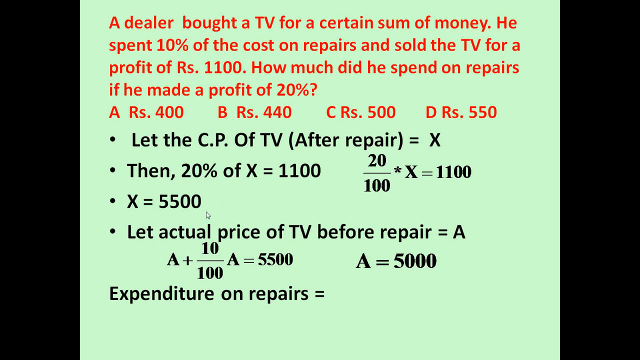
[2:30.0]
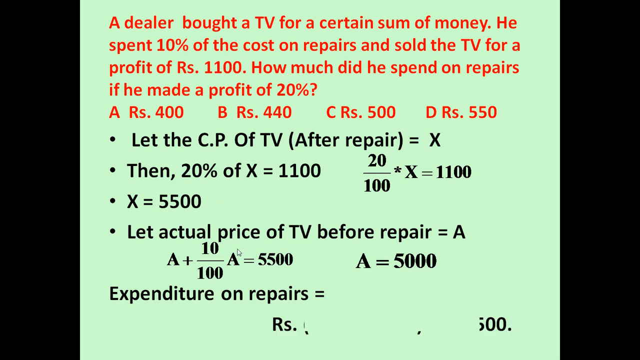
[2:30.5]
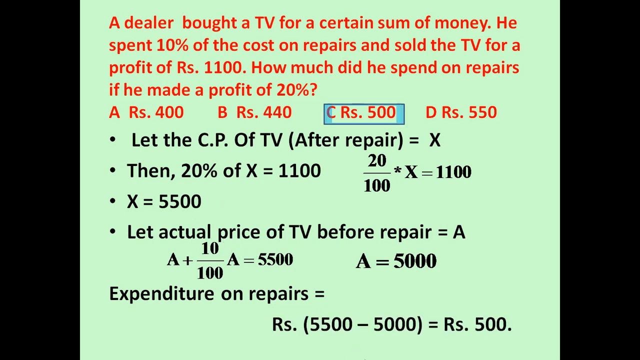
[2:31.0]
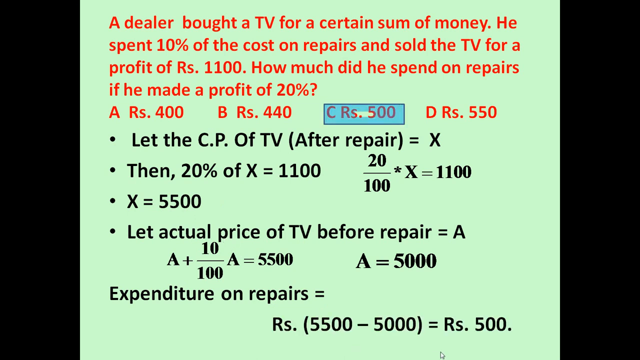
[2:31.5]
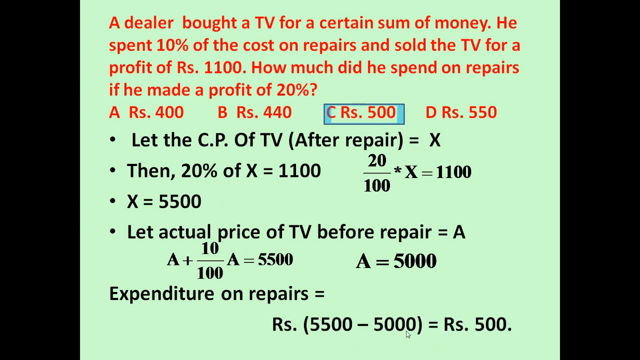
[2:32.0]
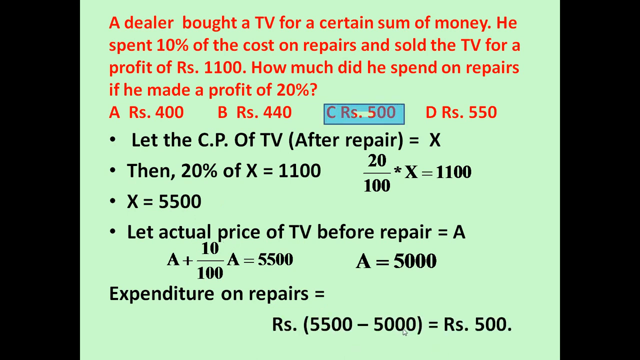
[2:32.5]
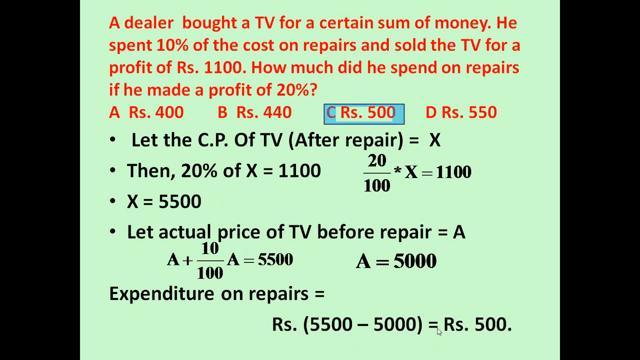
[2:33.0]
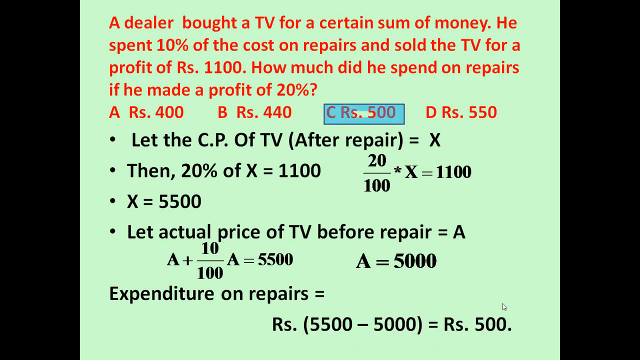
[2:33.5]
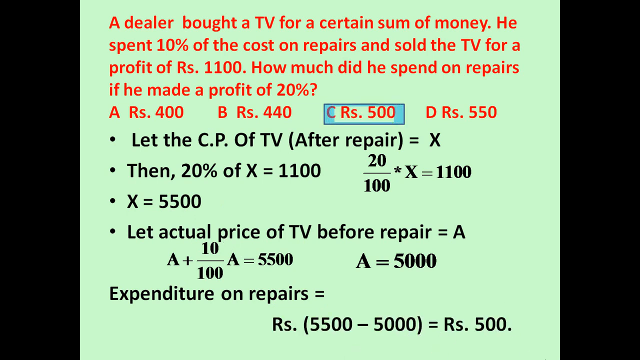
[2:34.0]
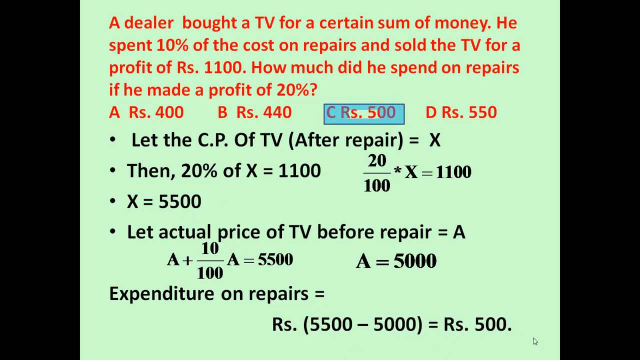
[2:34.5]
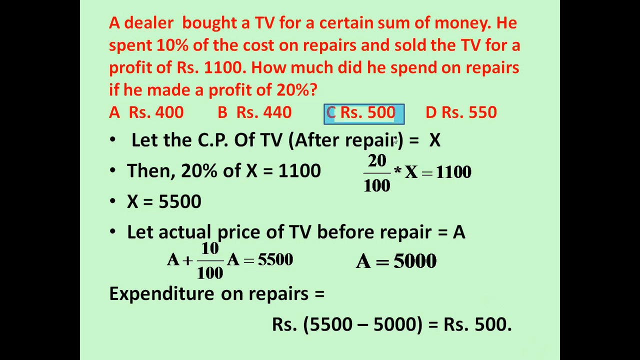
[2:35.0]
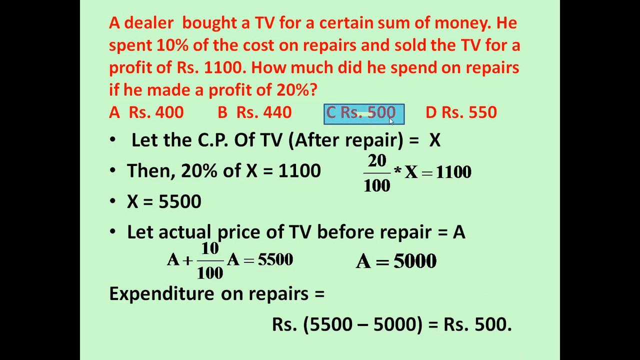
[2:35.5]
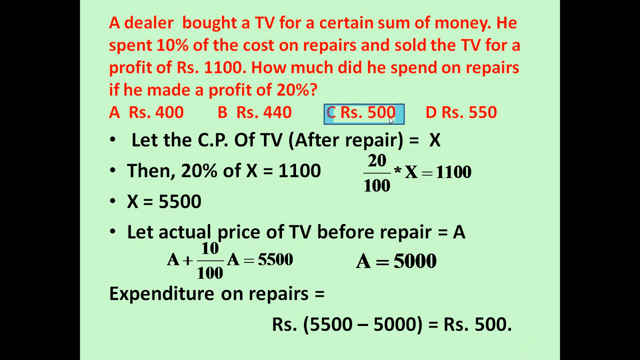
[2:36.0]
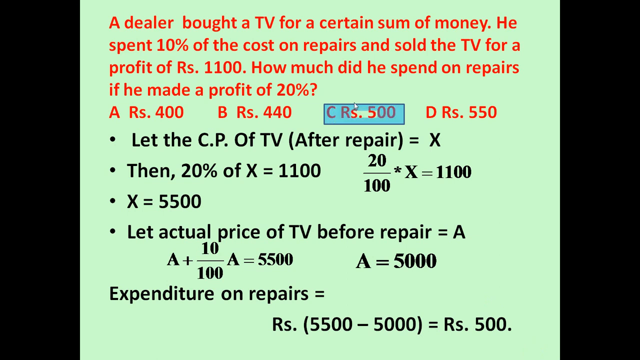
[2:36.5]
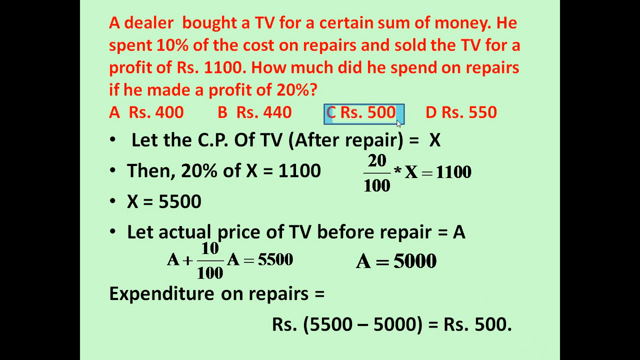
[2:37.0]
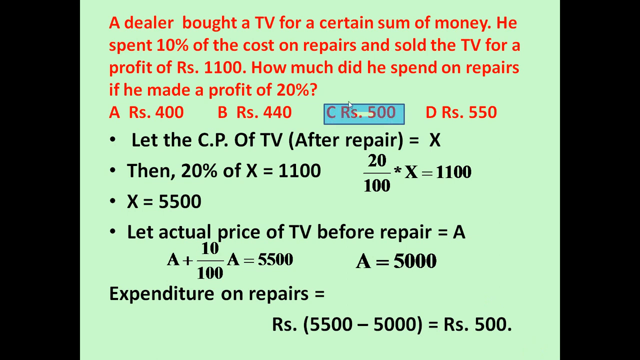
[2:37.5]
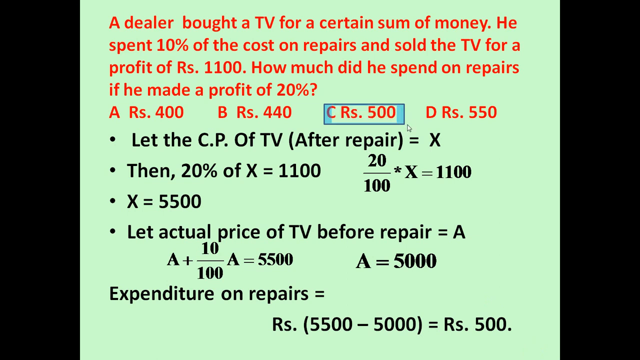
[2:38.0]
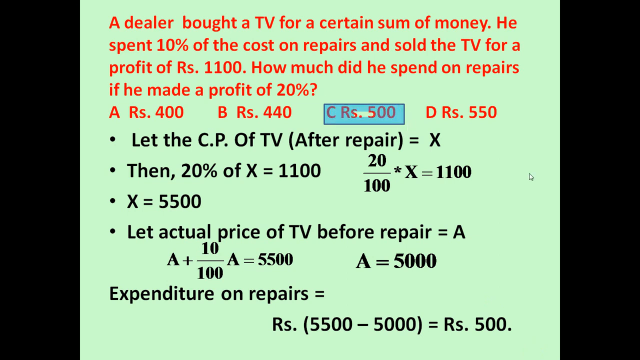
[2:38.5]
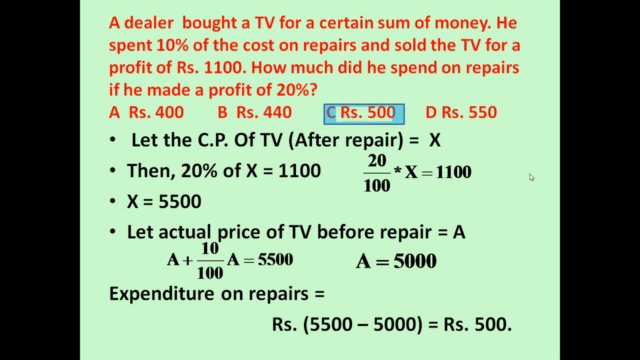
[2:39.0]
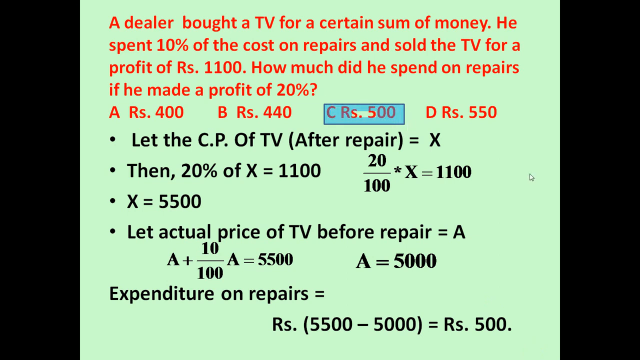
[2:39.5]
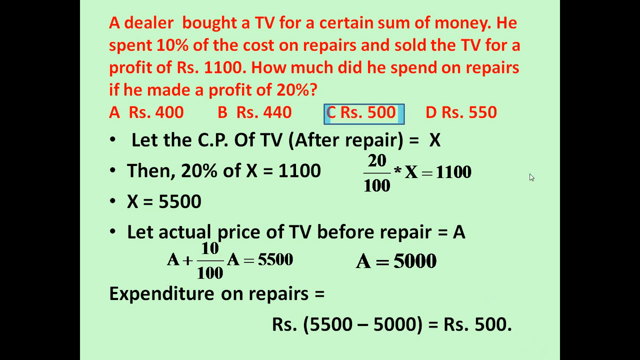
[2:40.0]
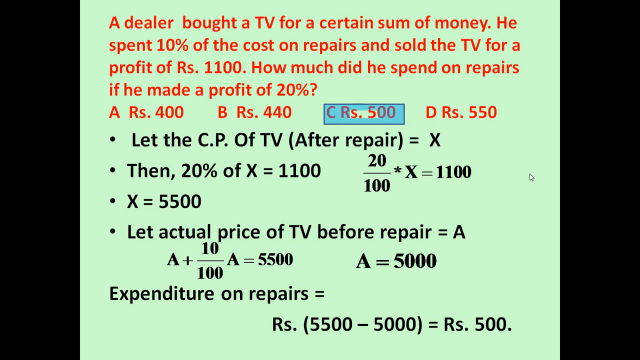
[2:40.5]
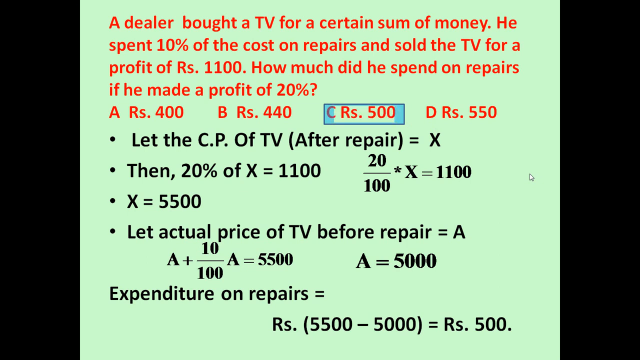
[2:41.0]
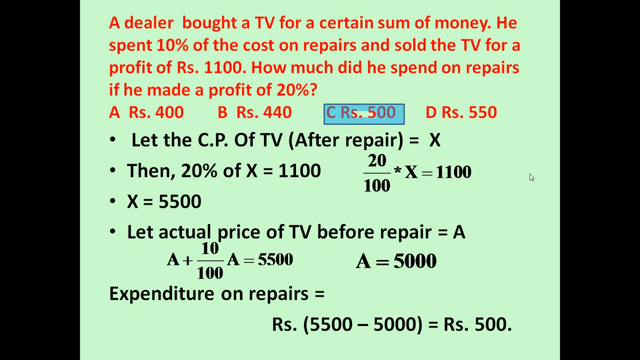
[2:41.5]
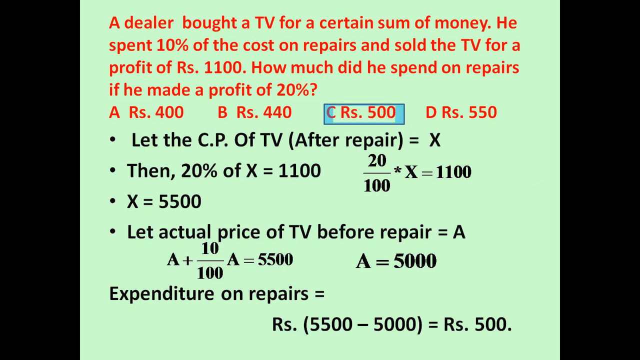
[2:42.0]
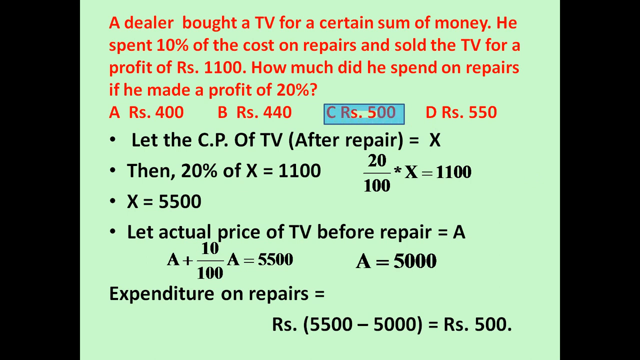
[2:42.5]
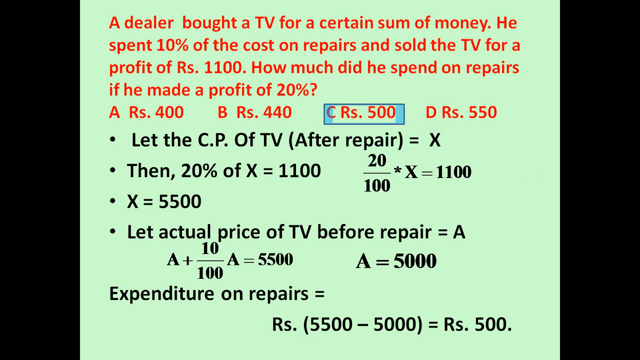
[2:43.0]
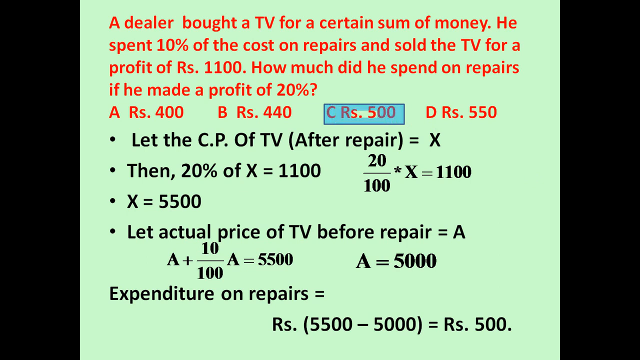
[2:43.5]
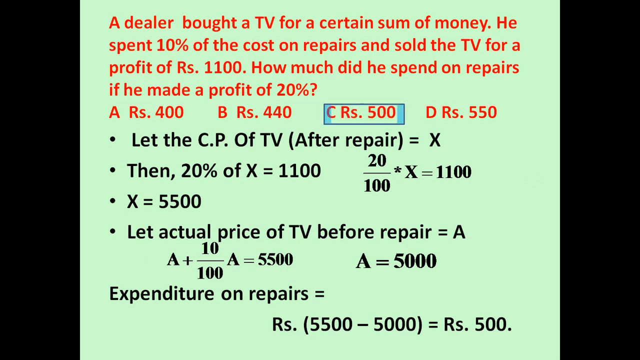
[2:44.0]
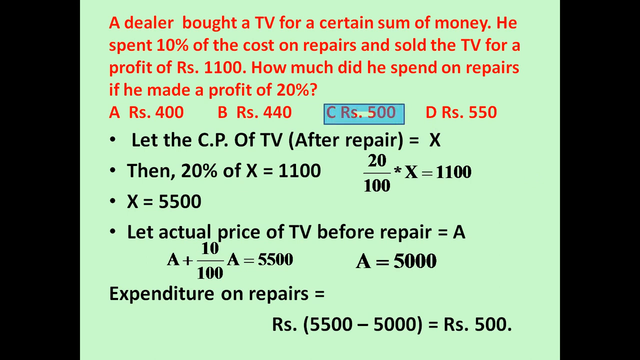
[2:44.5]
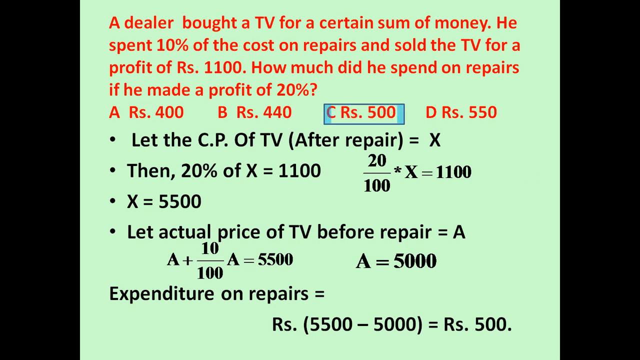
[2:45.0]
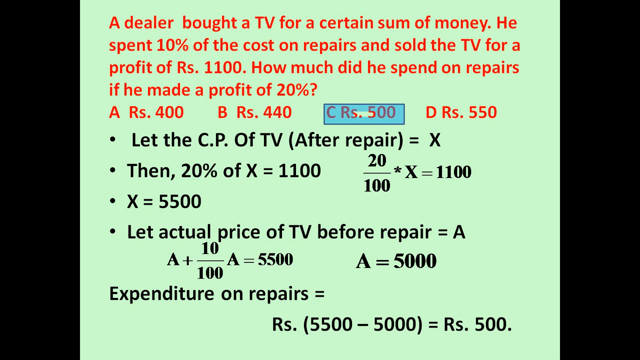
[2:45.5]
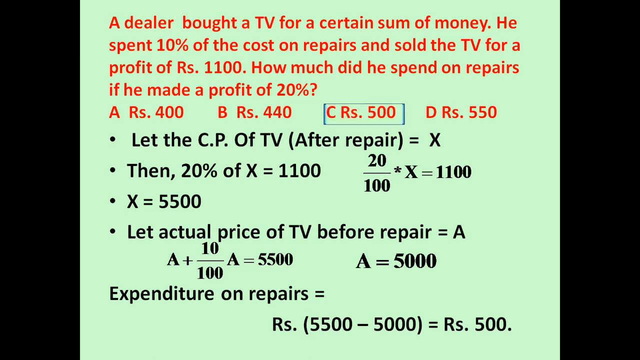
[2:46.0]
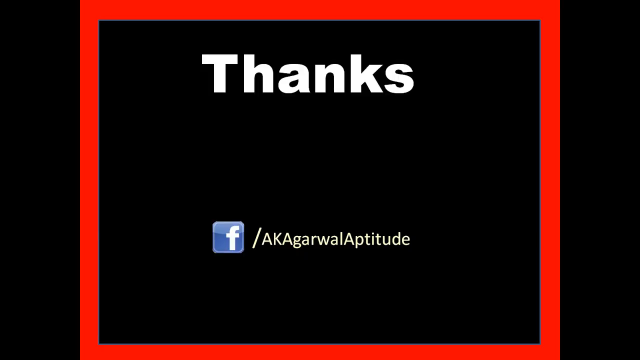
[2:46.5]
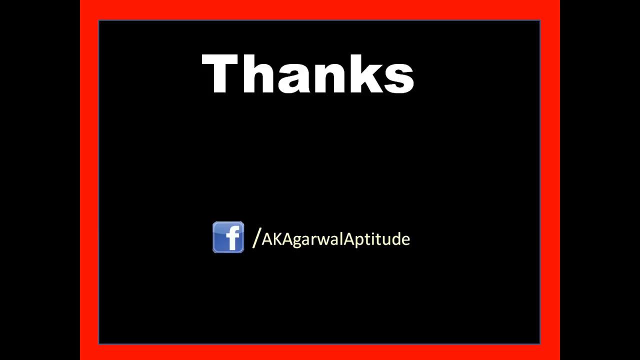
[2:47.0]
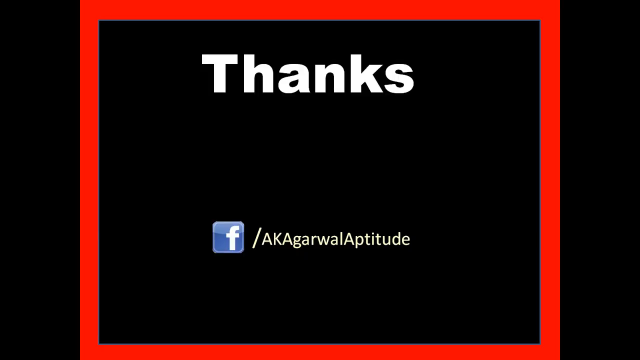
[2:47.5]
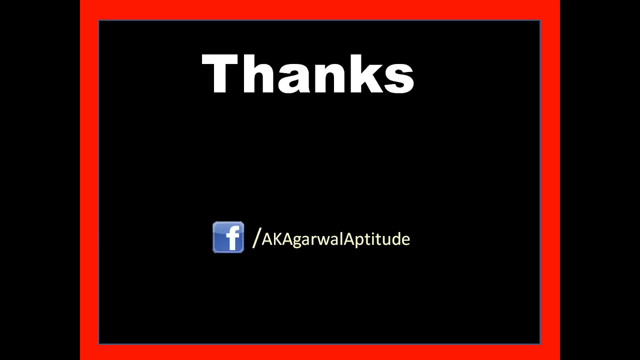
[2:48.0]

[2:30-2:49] A math problem is solved. First comes a picture of an Indian man with short black hair, a blue shirt, and a smile on his face, his left hand on his chin. Around his picture is the name A.K. Agarwal, and text says "this is the A.K. Agarwal Aptitude Series about Profit and Loss 4". Next, a question appears with four possible answers, all written in red. The question reads: "A dealer bought a TV for a certain amount of money. He spent 10% of the cost on repairs and sold the TV for a profit of Rs 1,100. How much did he spend on repairs if he made a profit of 20%?" The options are A, 400; B, 440; C, 500; D, 750. The solution is then shown step by step in black, concluding that the answer is C, Rs. 500.